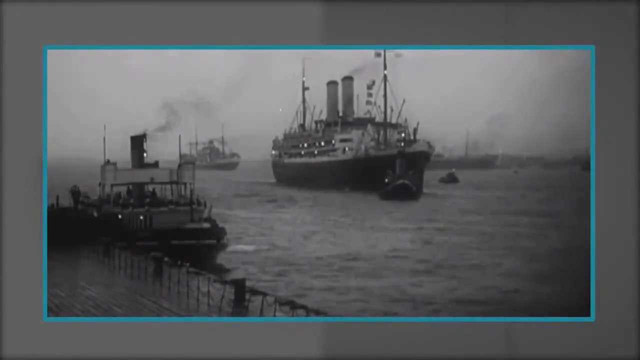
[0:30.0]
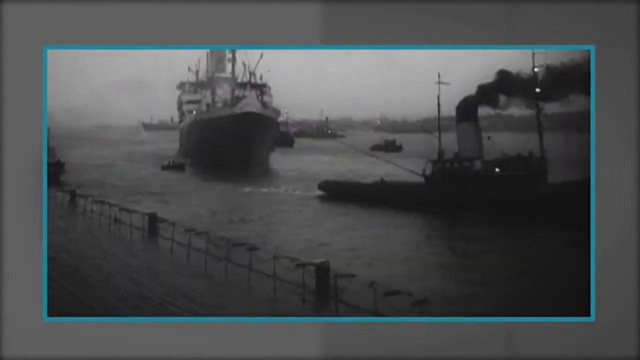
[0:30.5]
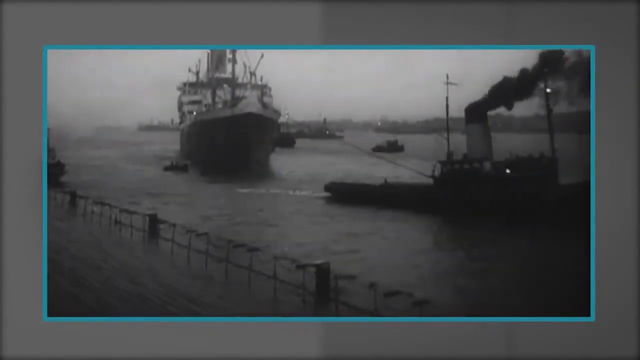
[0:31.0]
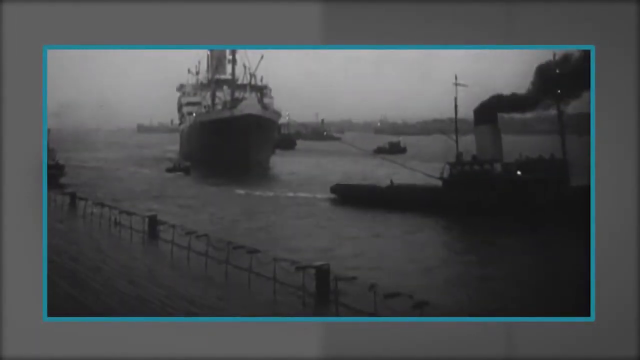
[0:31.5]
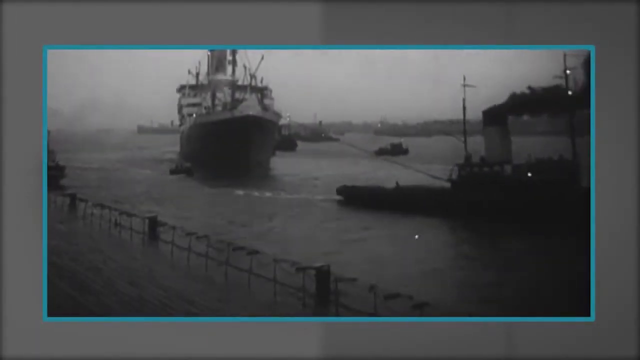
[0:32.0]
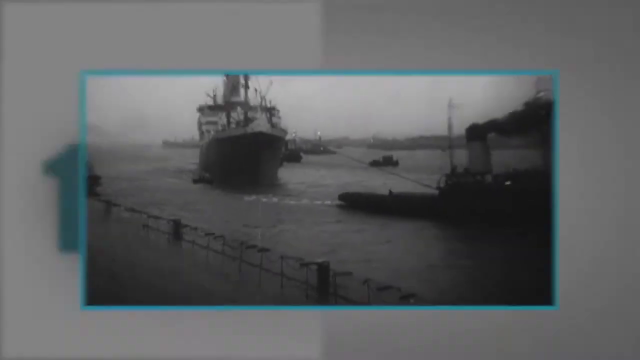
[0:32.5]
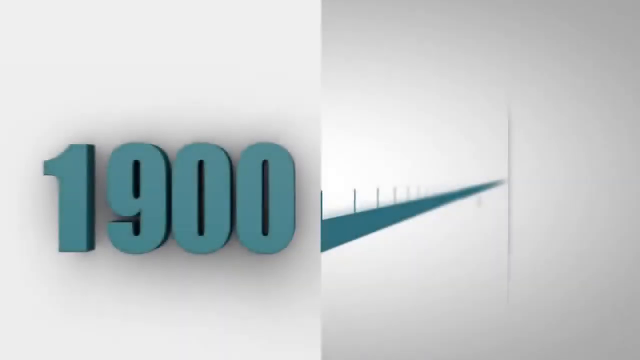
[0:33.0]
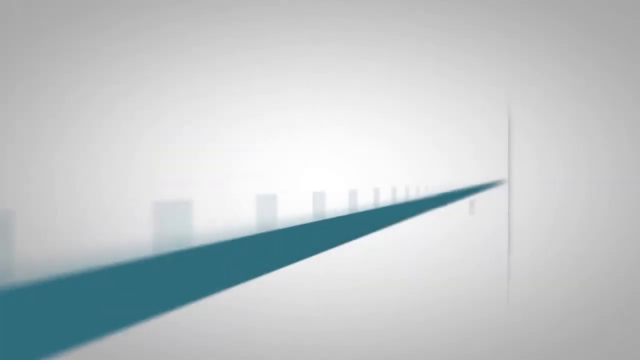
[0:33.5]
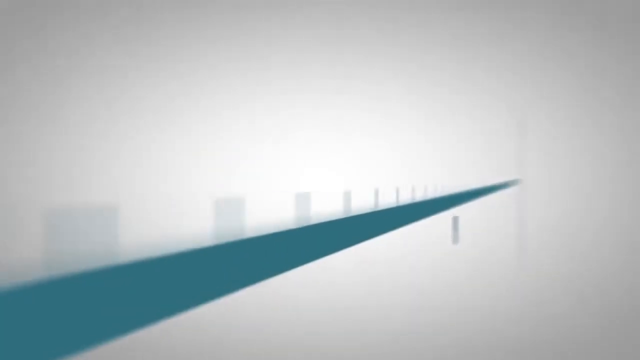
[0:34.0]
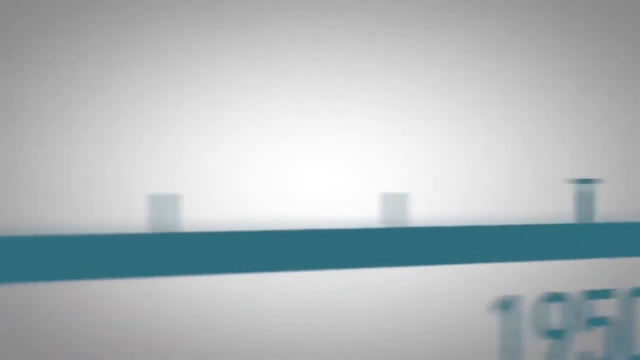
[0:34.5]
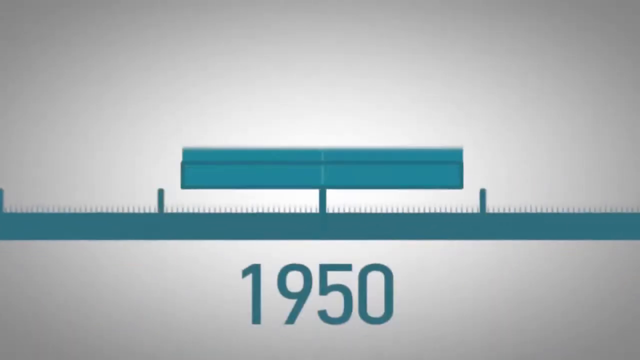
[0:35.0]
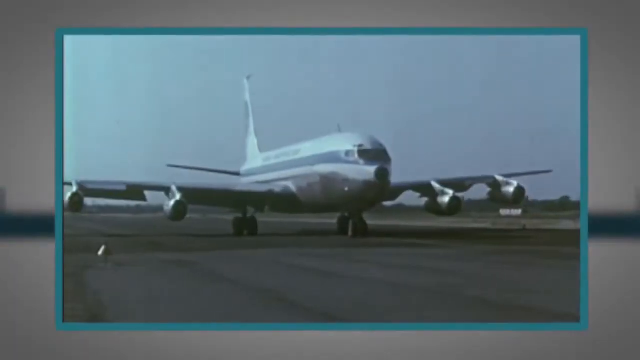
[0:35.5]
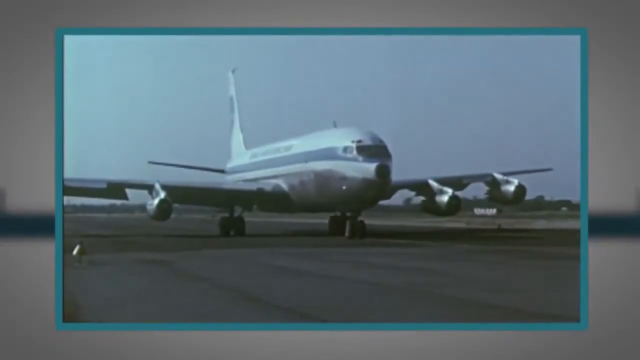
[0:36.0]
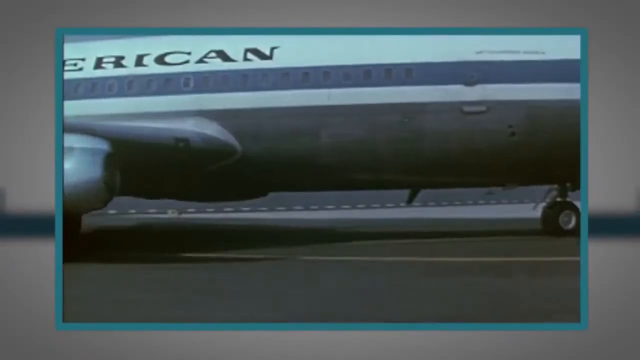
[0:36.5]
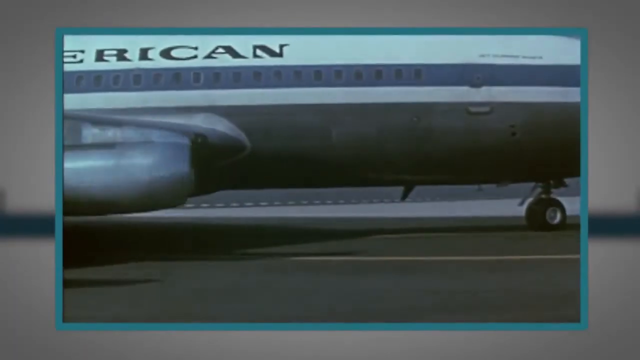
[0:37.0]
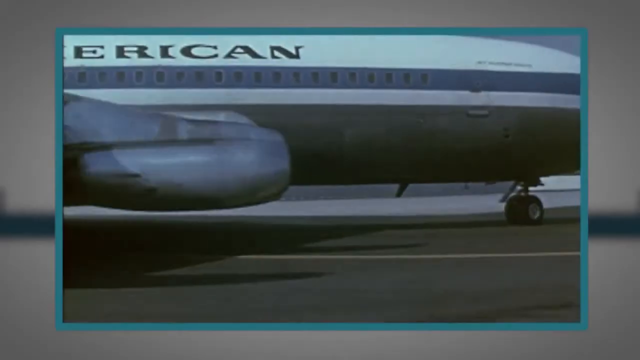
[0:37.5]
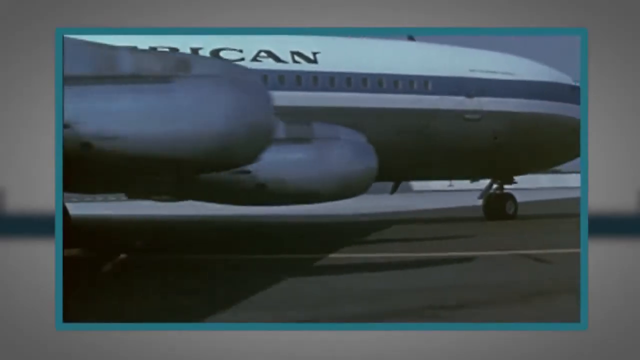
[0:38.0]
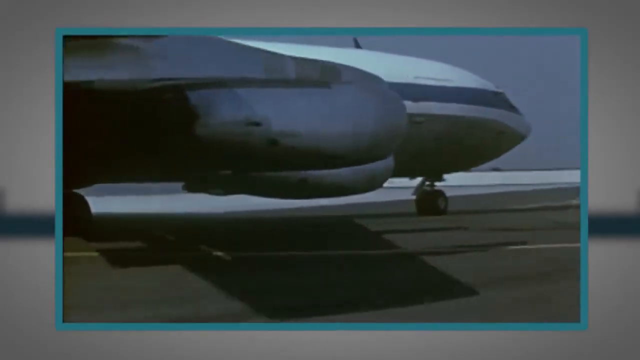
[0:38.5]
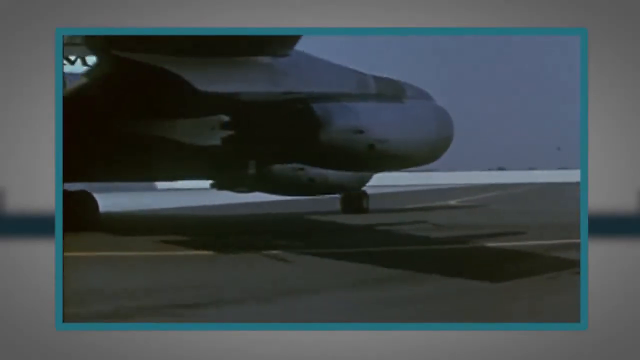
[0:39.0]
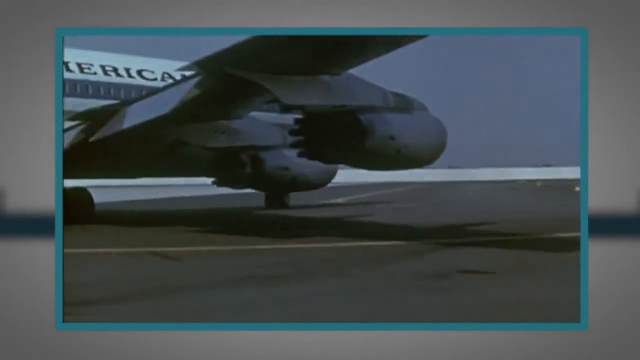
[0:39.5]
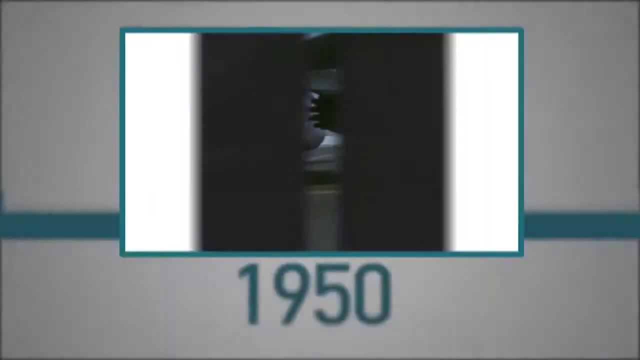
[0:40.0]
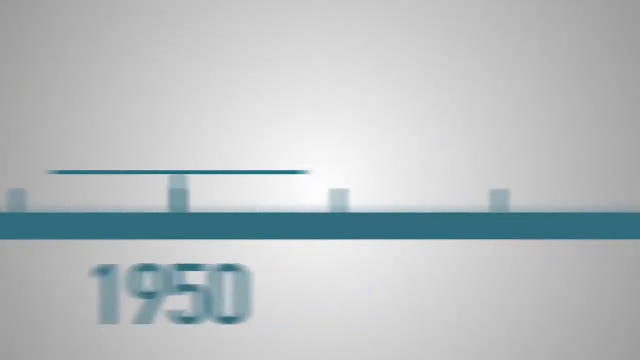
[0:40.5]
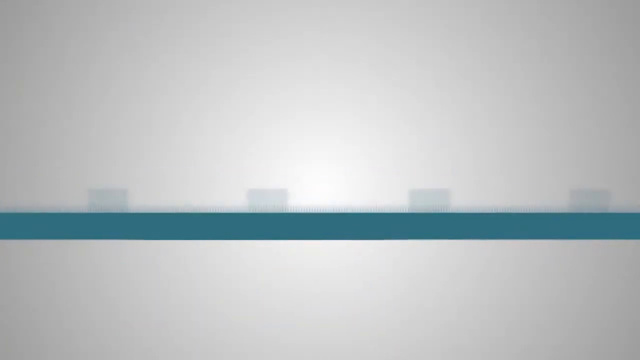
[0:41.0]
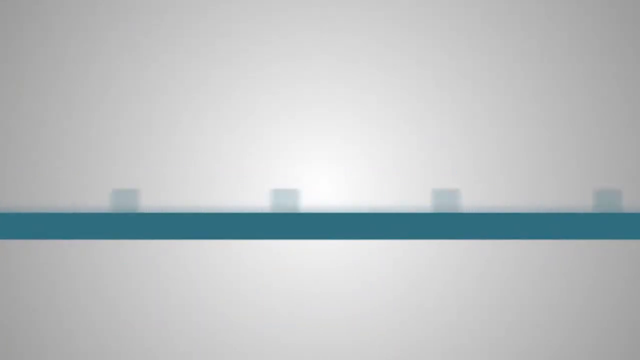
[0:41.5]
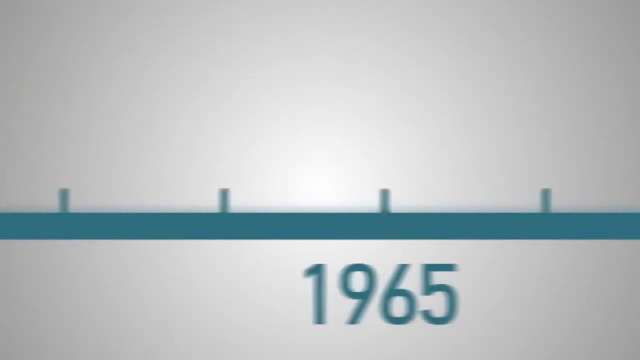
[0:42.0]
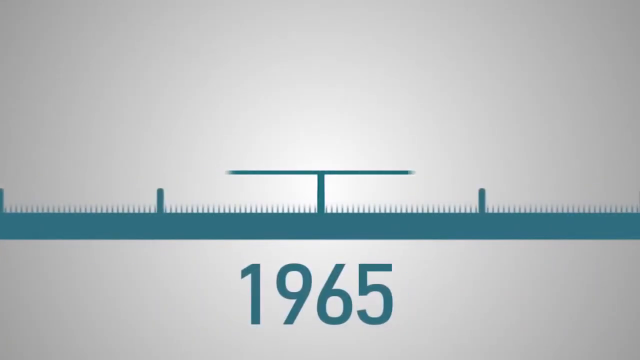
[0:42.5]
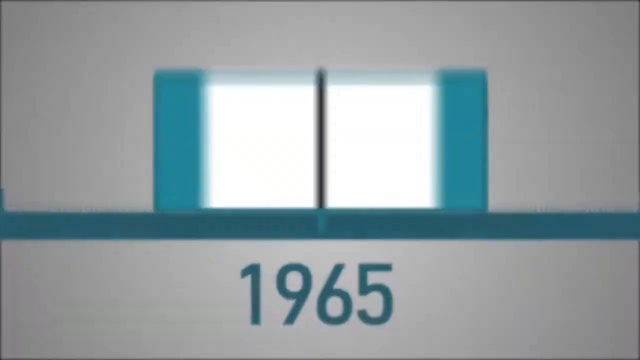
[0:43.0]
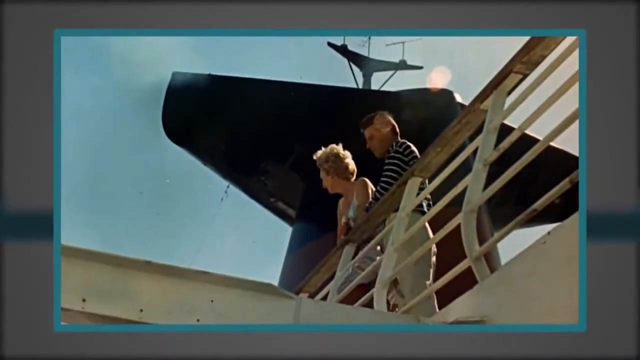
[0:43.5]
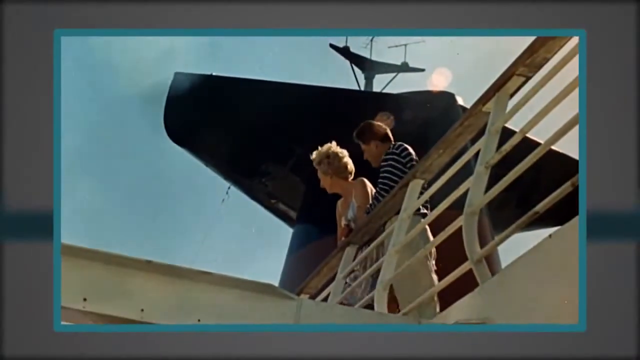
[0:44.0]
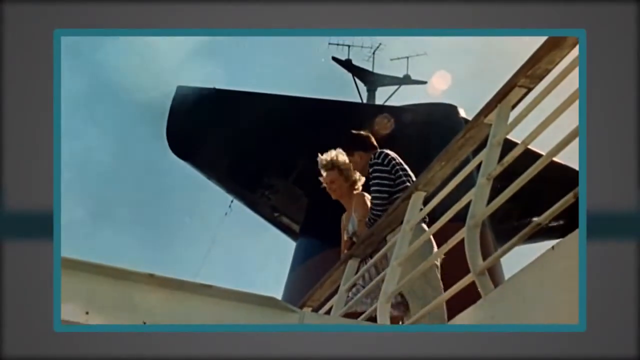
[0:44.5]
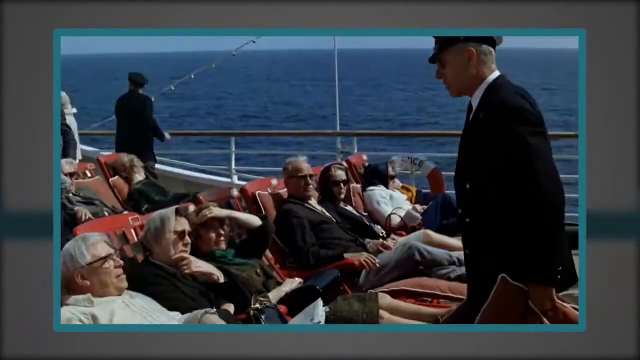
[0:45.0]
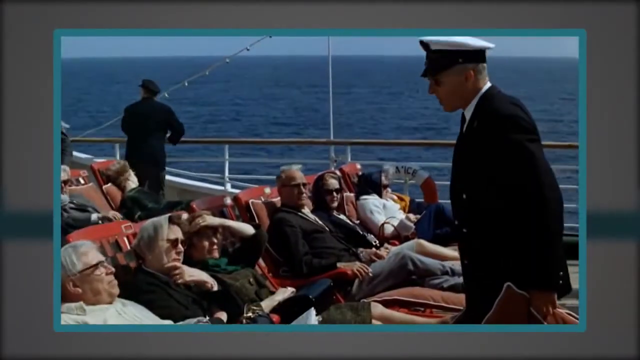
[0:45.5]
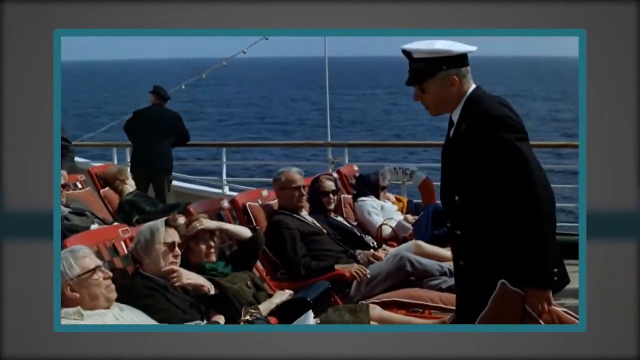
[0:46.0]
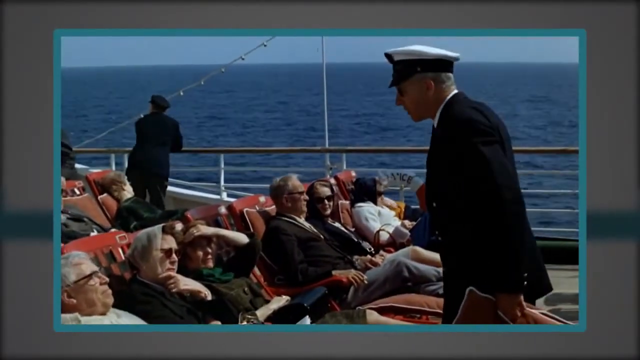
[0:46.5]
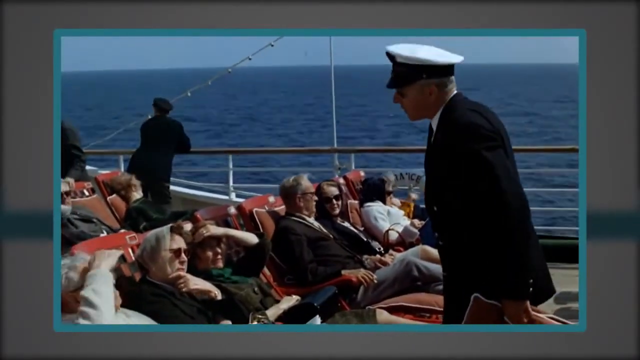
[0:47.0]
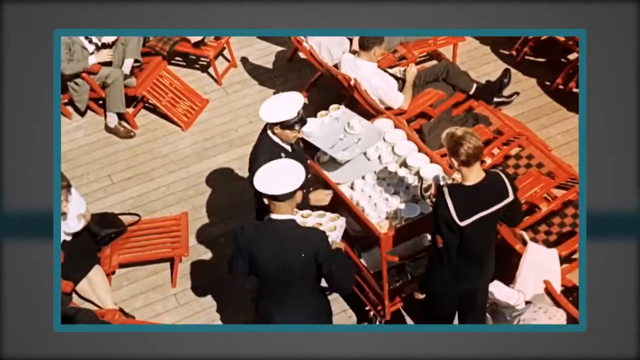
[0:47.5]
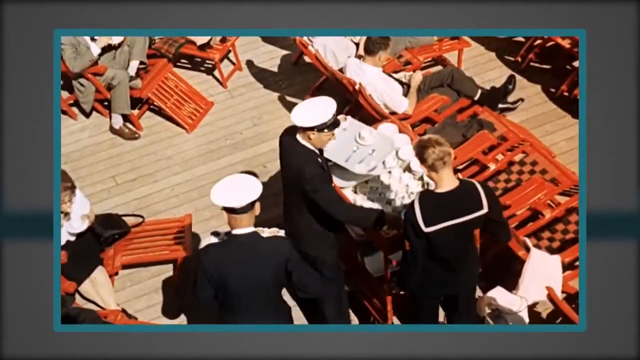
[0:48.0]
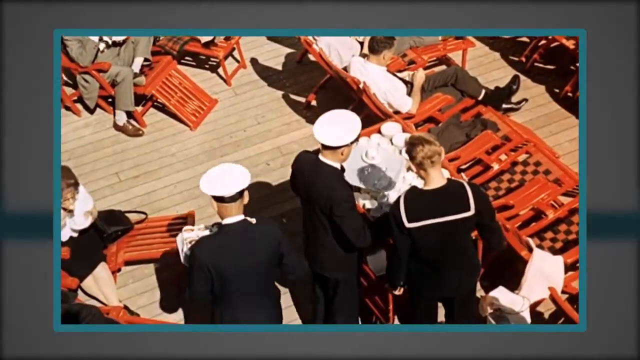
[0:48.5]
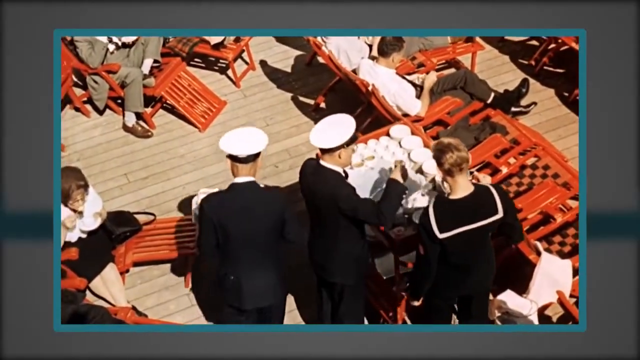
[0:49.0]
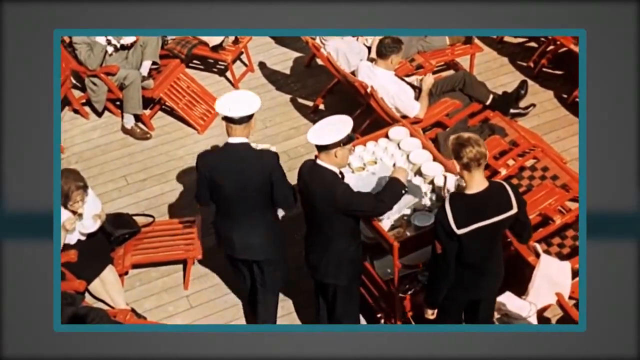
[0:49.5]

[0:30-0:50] The same boat from the 1900s appears at a different angle, a front angle of what may be that boat being towed in. The teal timeline returns, now showing the year "1950", and a large commercial jet, possibly an American Airlines jet, comes toward the camera a little off to the right; a side view then shows it is an American jet. The timeline moves to "1965": a couple leans over the rail of a cruise ship, and a captain talks to a group of people lounging in chairs on a cruise ship. An aerial view shows people in red lounge chairs and very official-looking staff who appear to be handing out water or something similar; the staff wear white official-looking hats like those in the military and black suit jackets. The passengers are dressed semi-formally. The older footage is in black and white, while this more recent set is in color.